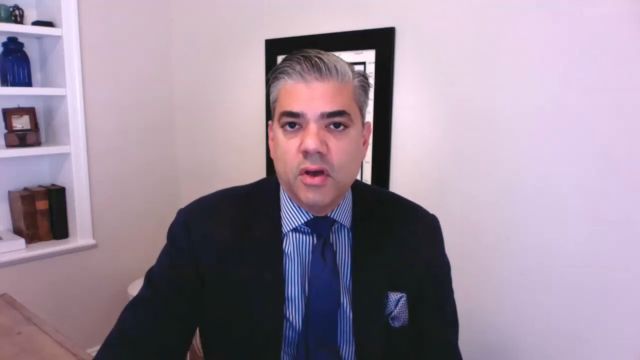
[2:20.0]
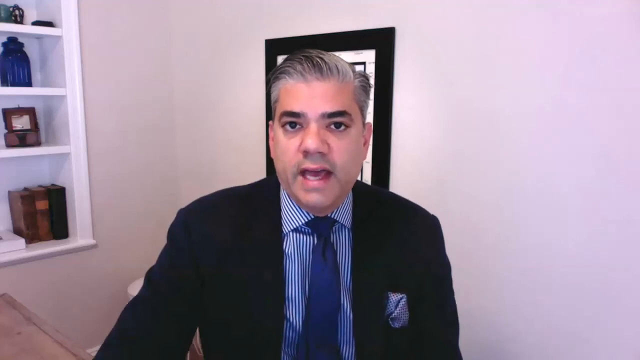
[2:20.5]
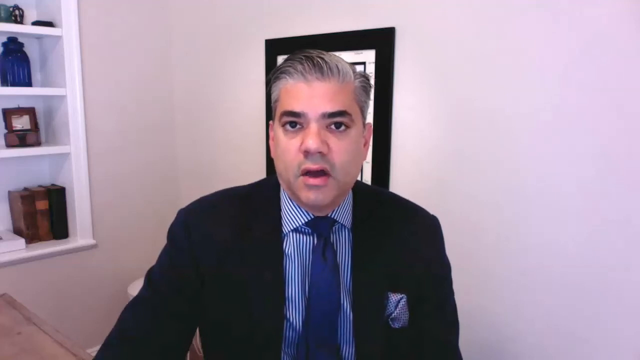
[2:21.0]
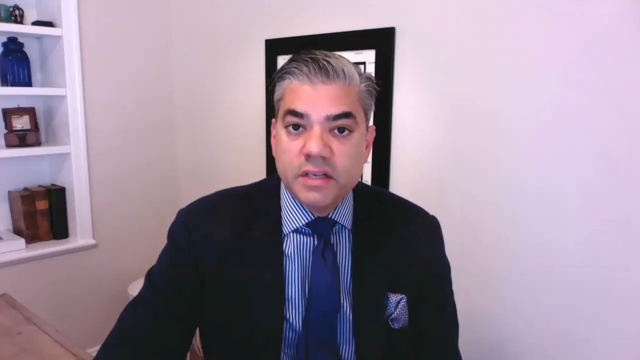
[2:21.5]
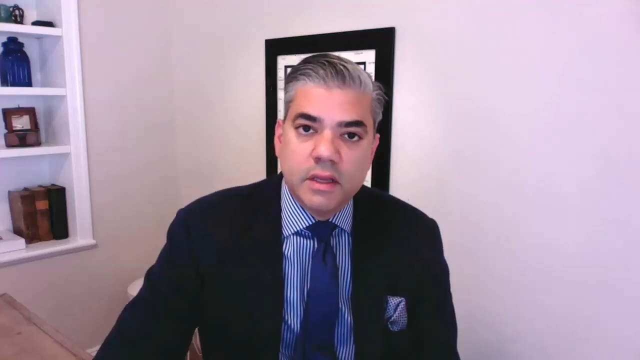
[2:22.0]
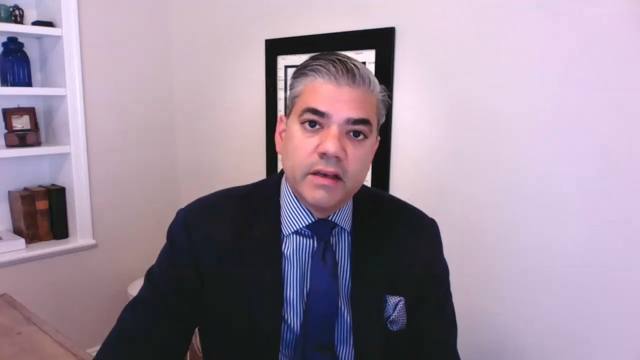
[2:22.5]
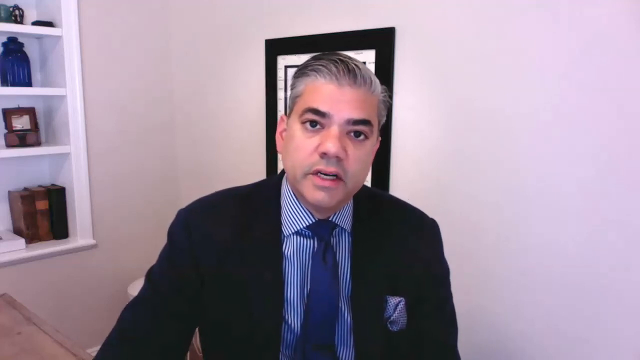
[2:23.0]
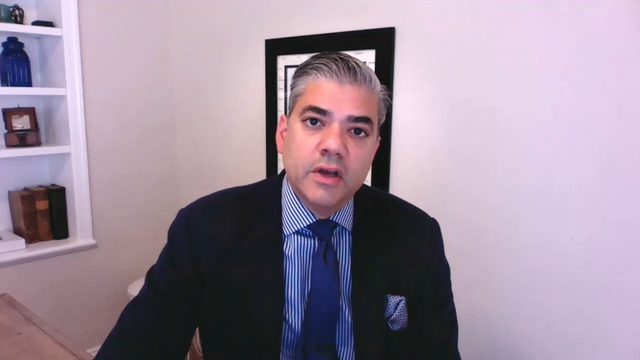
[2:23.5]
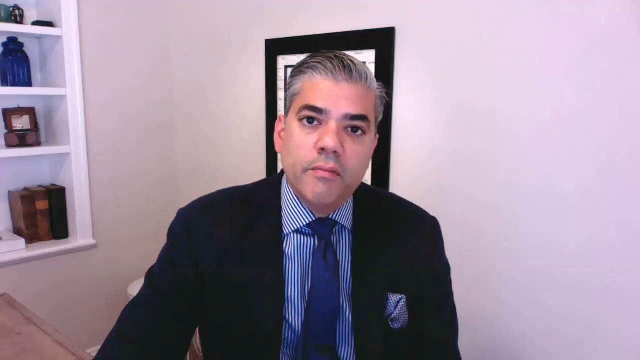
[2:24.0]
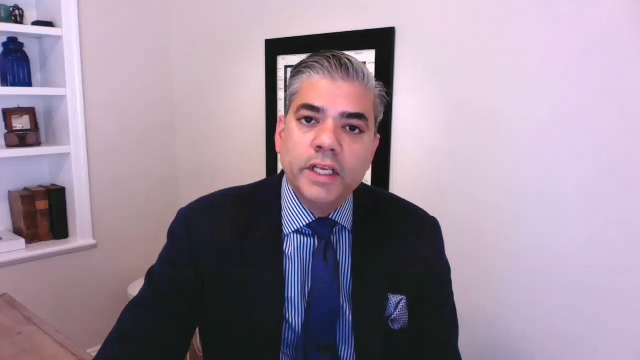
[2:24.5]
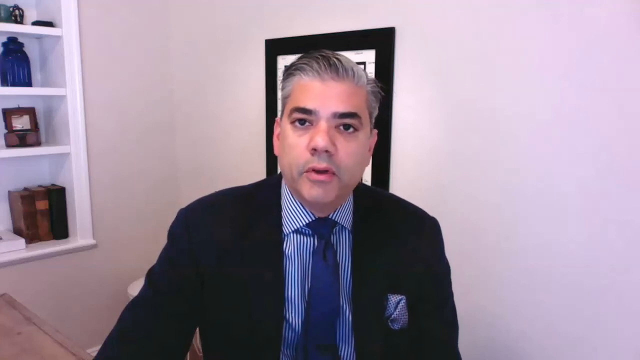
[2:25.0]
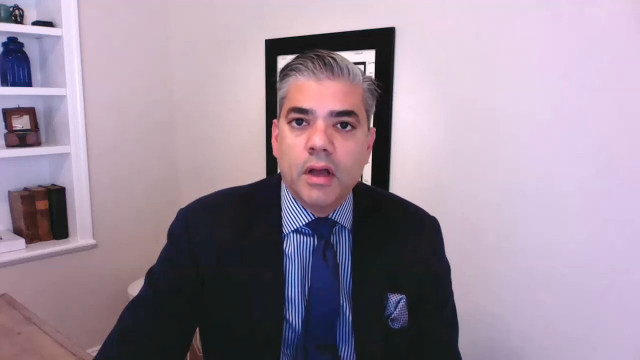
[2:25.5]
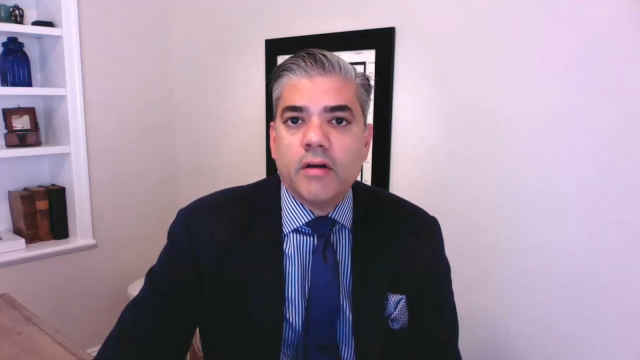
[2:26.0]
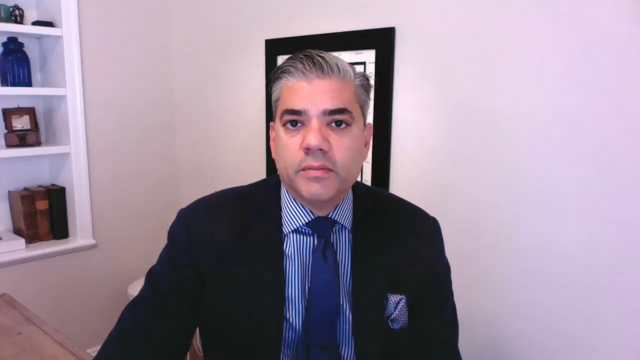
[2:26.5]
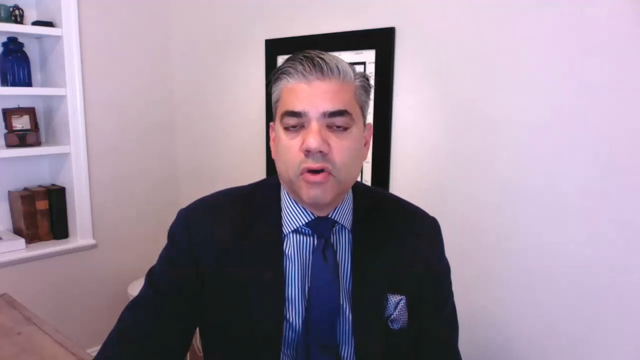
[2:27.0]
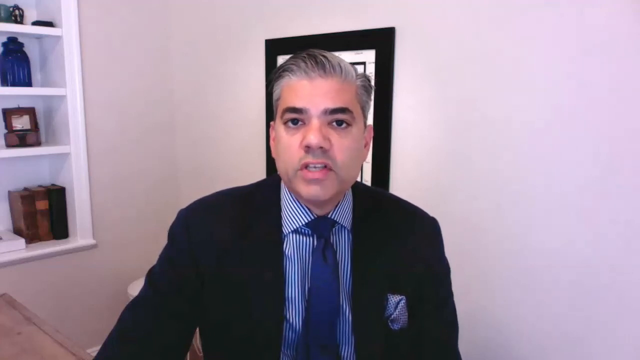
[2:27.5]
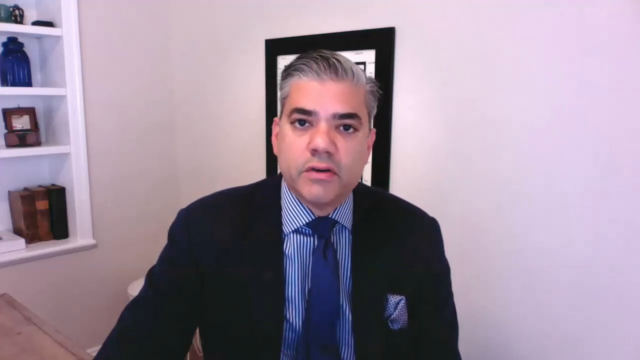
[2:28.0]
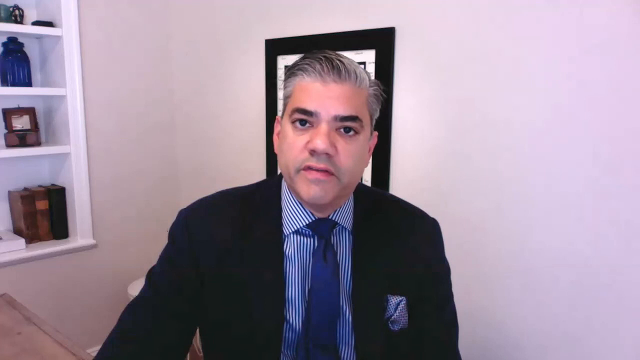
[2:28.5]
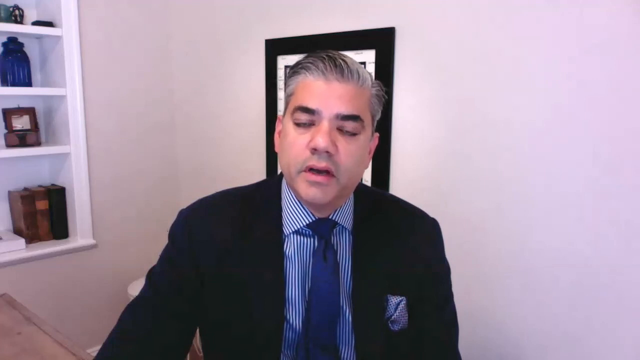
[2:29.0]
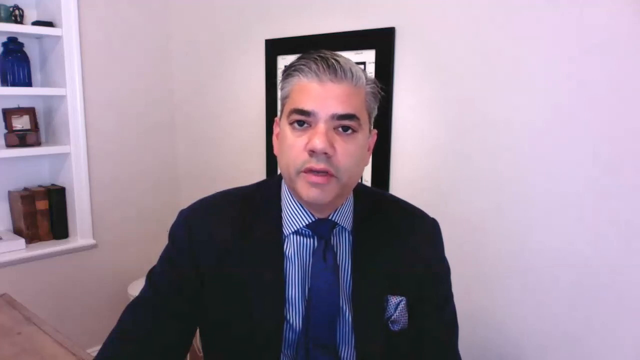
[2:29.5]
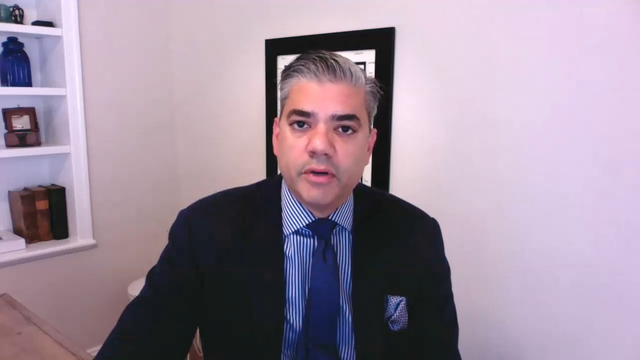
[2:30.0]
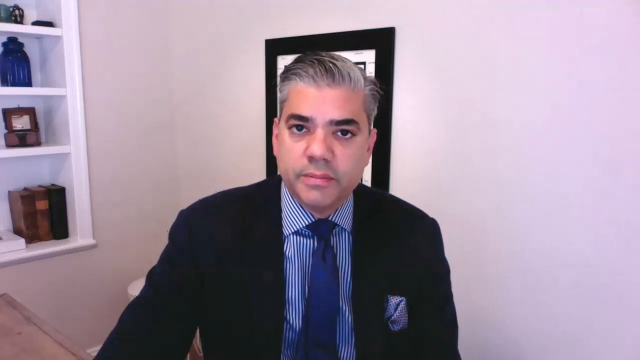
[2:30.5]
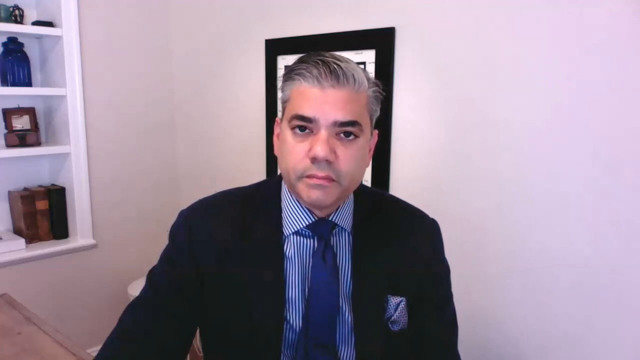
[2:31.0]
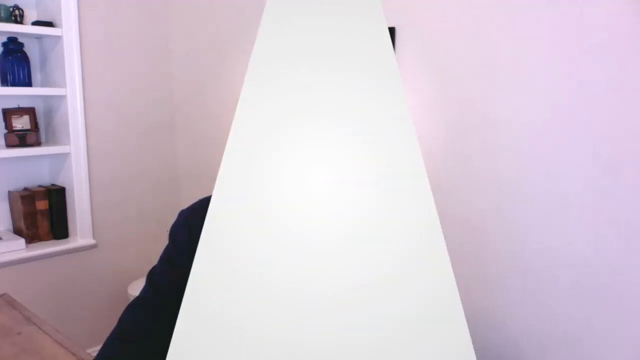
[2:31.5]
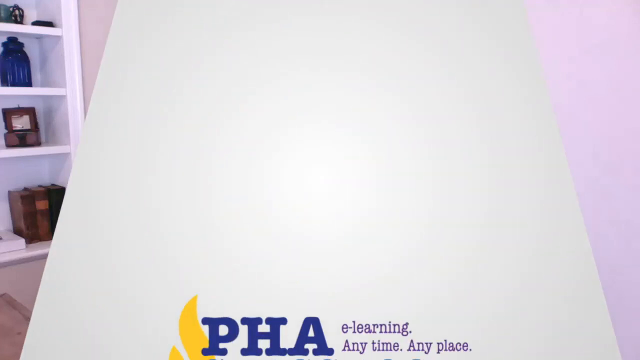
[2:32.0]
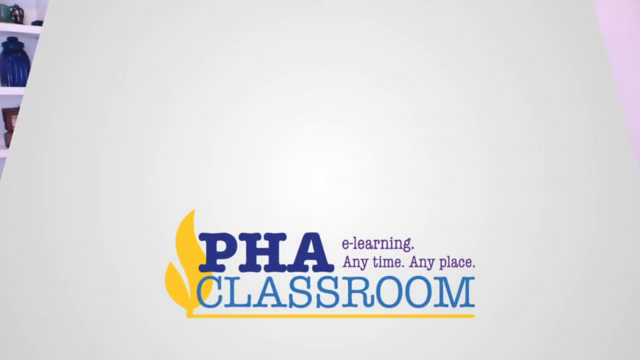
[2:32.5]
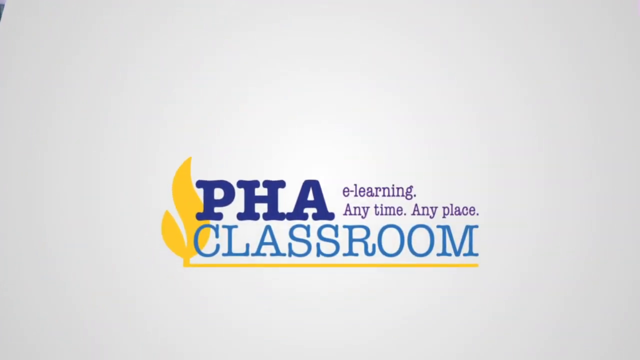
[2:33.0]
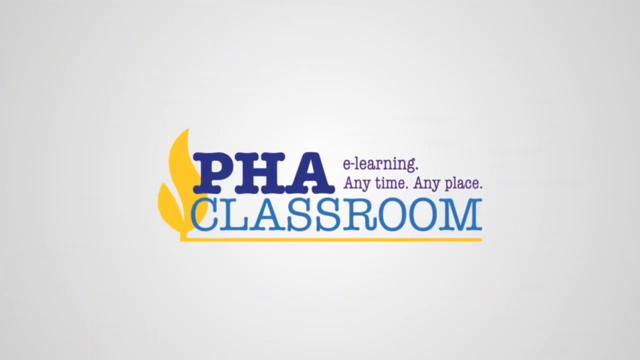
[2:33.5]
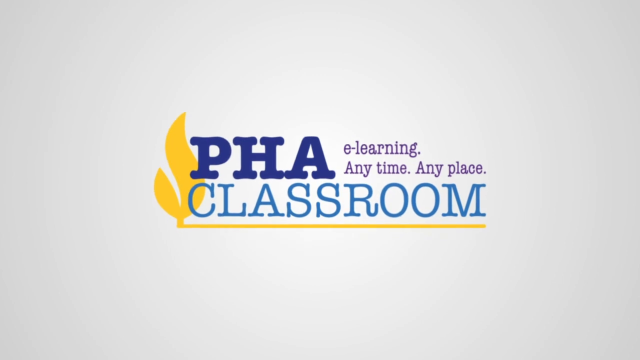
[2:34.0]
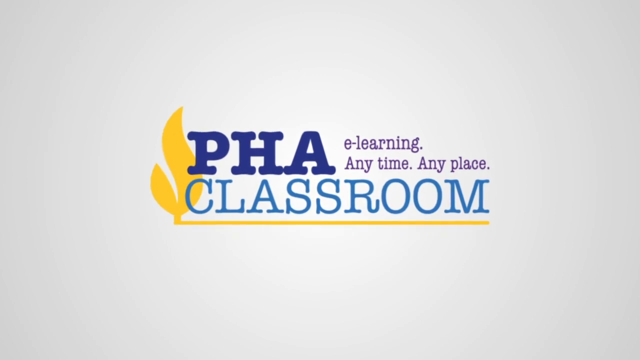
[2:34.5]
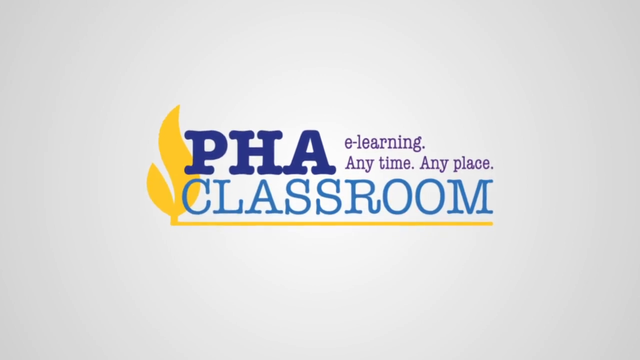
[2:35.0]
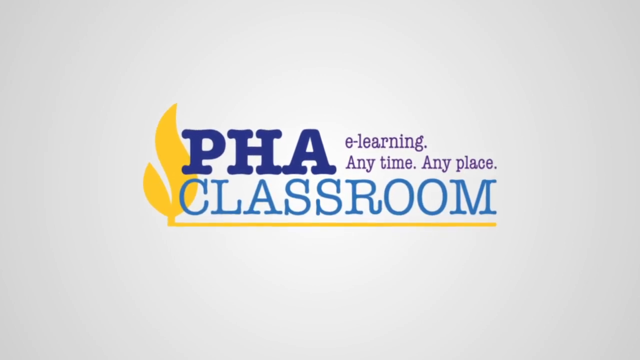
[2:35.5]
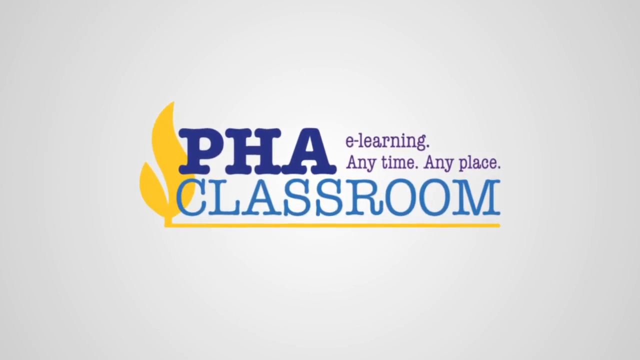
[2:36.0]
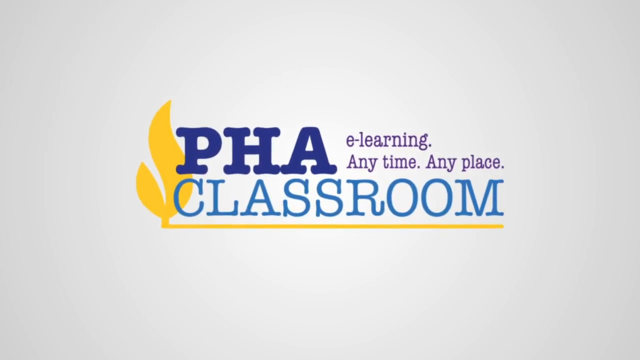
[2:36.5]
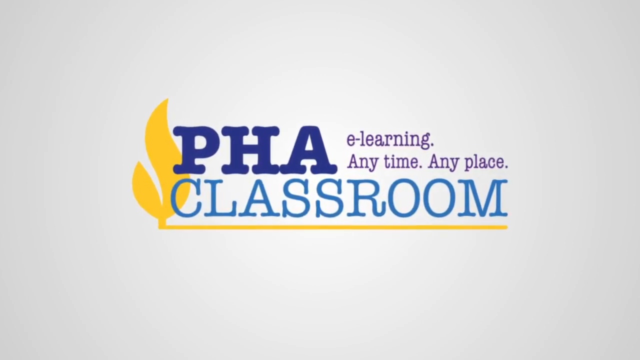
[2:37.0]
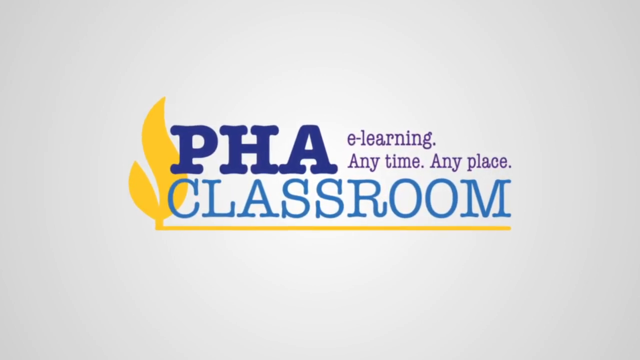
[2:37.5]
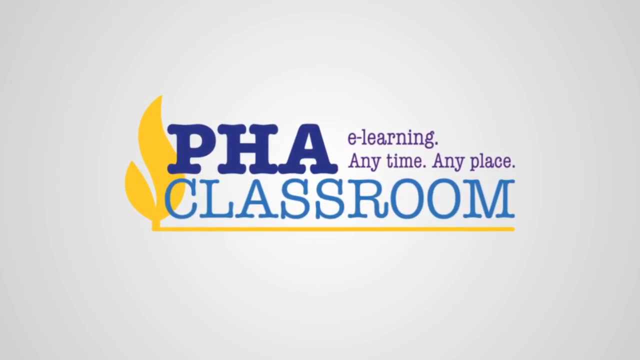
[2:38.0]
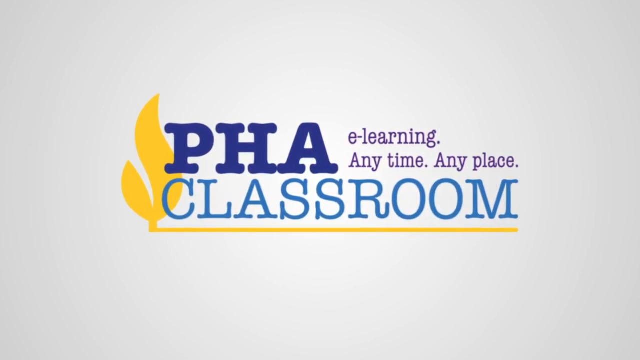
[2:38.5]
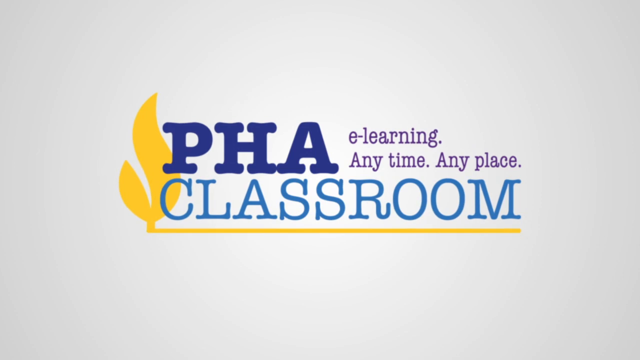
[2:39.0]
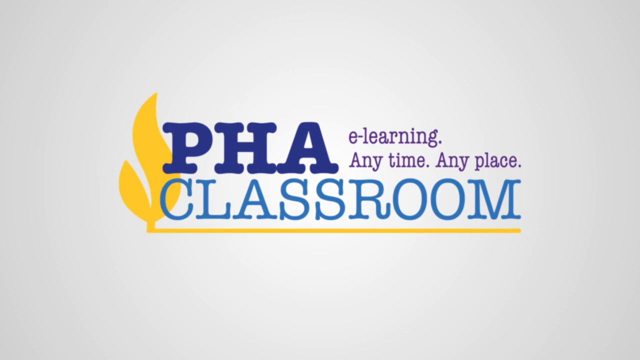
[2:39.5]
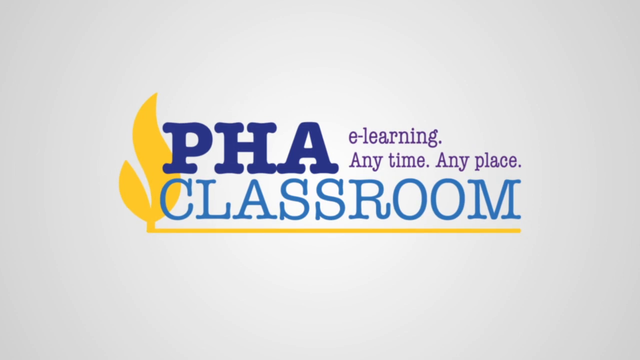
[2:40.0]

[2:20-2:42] The man continues talking with a serious look on his face, wearing a blue and white shirt and a blue tie, for about the first 10 seconds. Then a transition brings in a white screen in a triangle pattern that starts as a triangle and extends outward. From the bottom rises a logo also seen at the start of the video: a flames logo on the left with "PHA" in capital letters and "e-learning anytime anyplace", and underneath that "classroom" with a yellow underline. The logo comes up from the bottom, gets bigger in the center of the screen and expands toward the viewer until it stops, pausing there for the last few seconds before the video finishes.